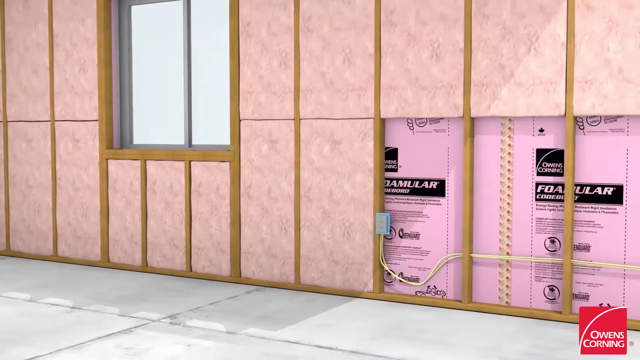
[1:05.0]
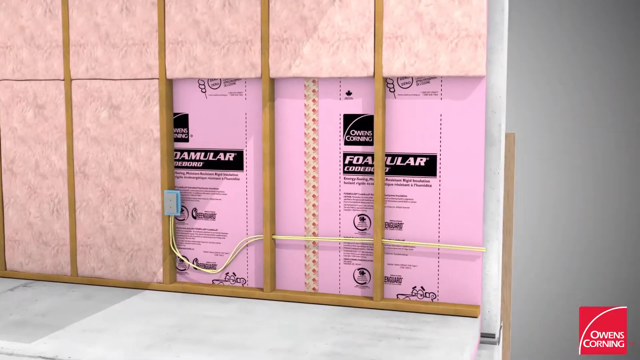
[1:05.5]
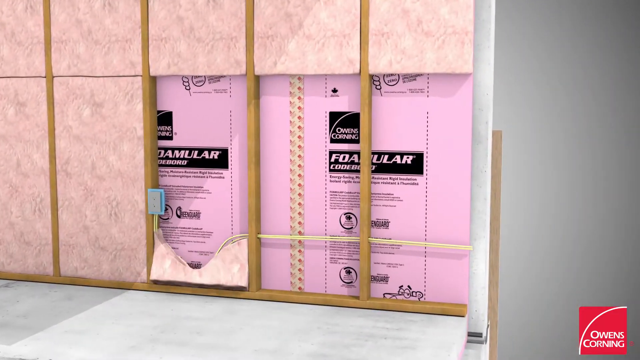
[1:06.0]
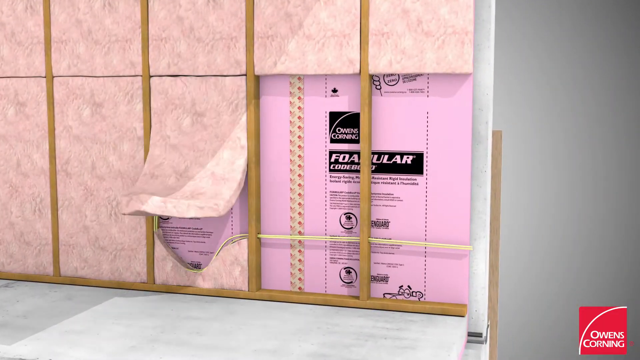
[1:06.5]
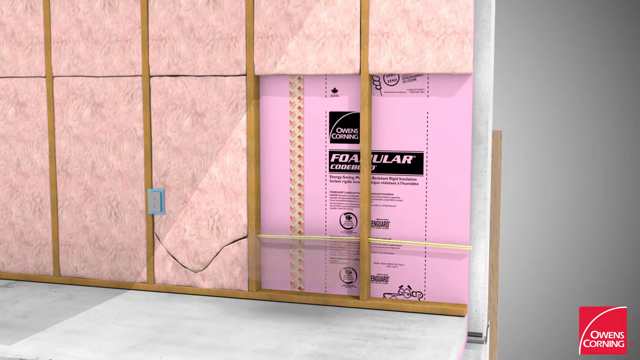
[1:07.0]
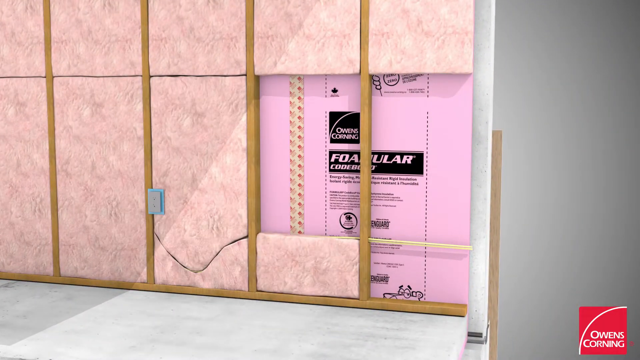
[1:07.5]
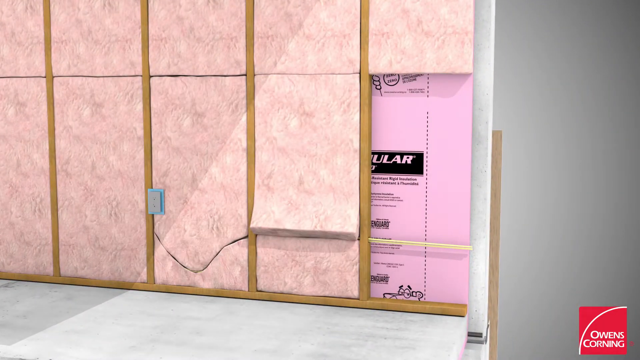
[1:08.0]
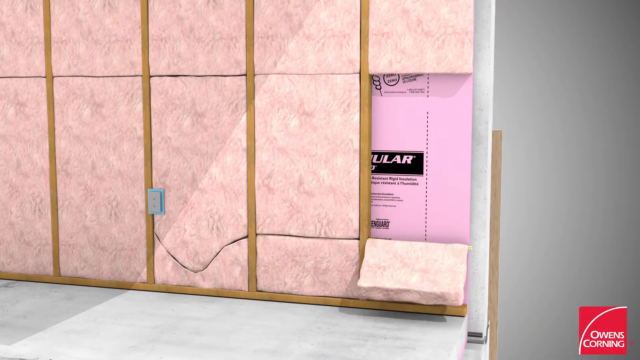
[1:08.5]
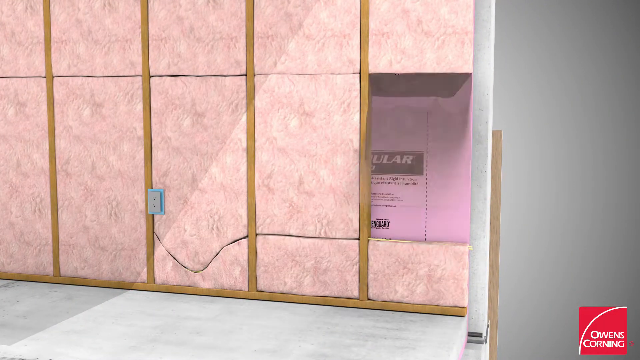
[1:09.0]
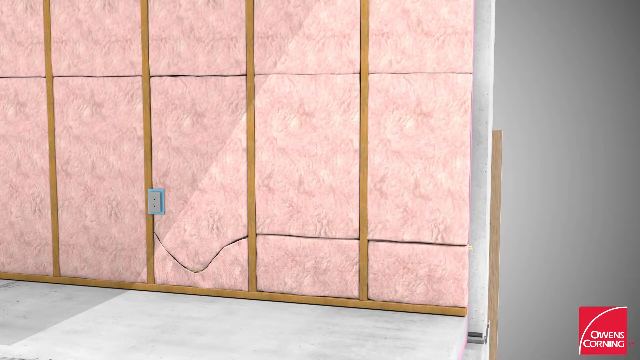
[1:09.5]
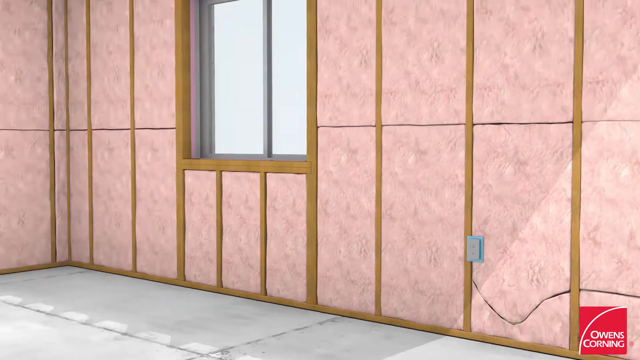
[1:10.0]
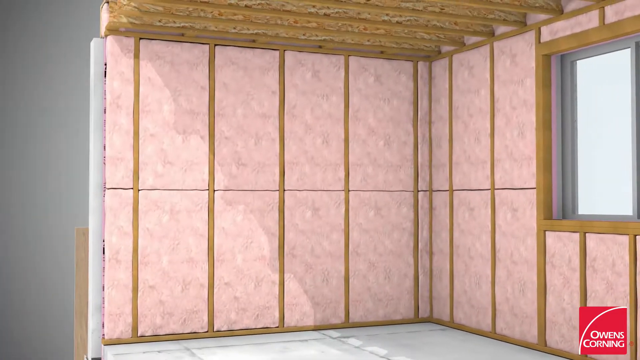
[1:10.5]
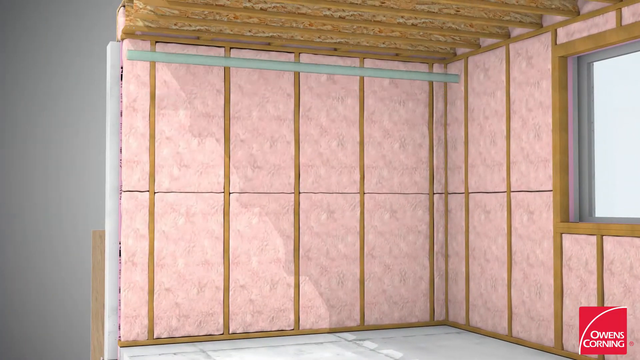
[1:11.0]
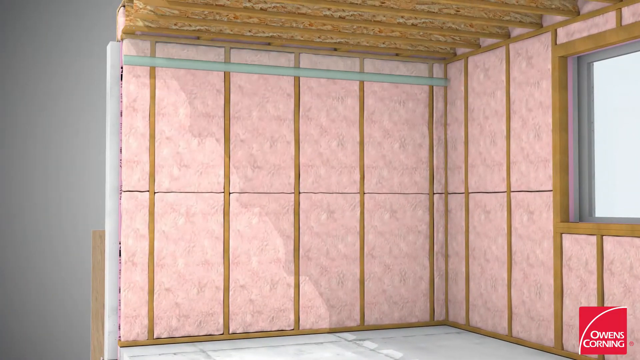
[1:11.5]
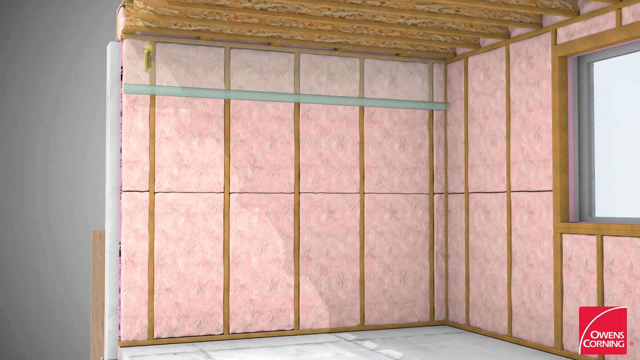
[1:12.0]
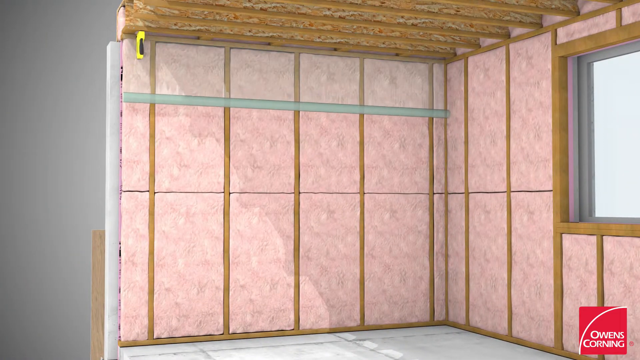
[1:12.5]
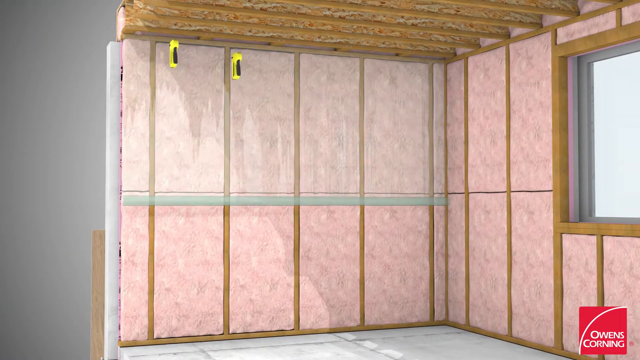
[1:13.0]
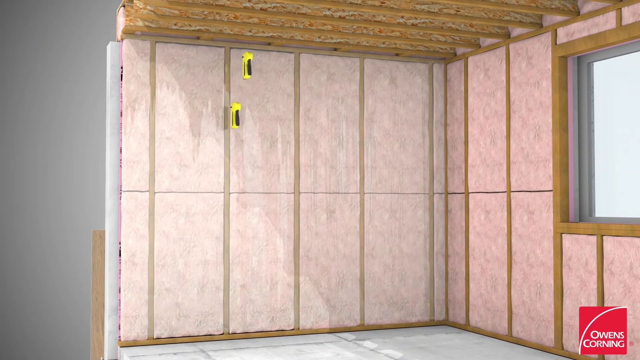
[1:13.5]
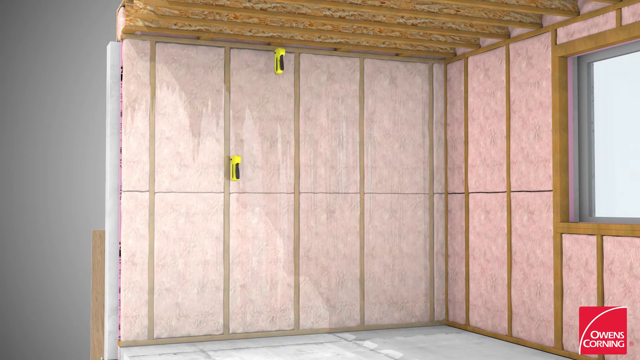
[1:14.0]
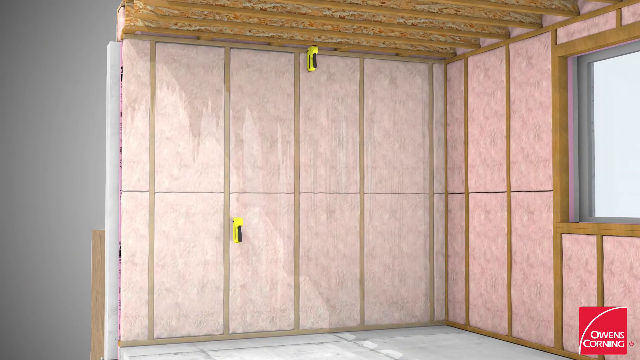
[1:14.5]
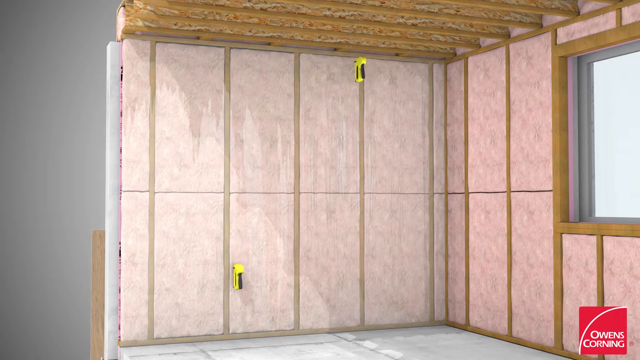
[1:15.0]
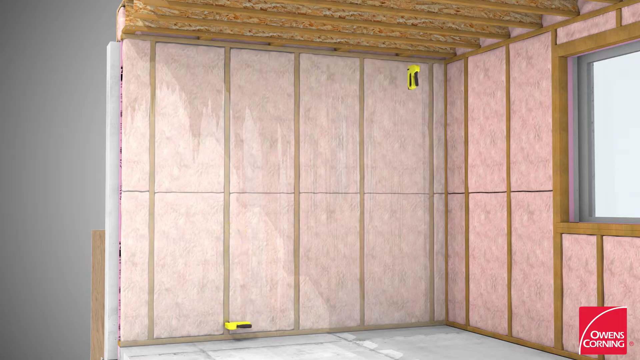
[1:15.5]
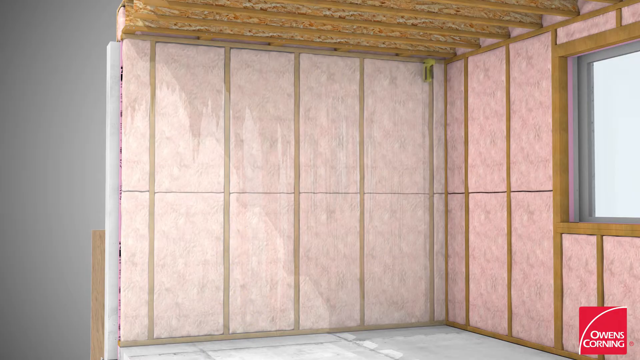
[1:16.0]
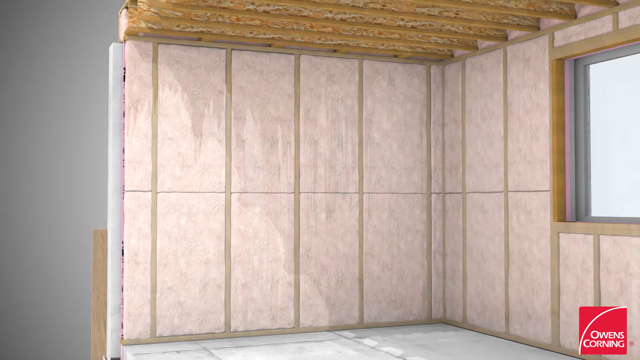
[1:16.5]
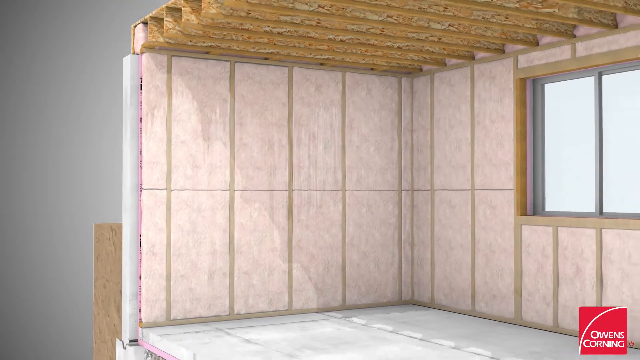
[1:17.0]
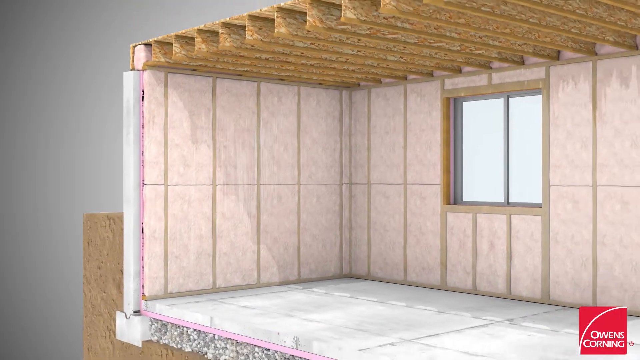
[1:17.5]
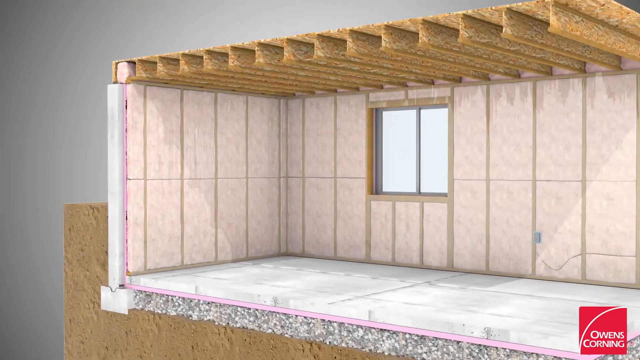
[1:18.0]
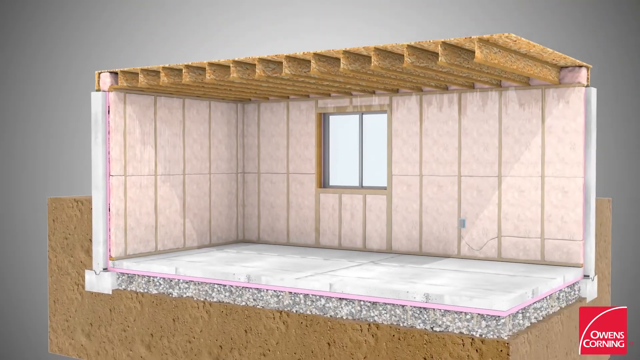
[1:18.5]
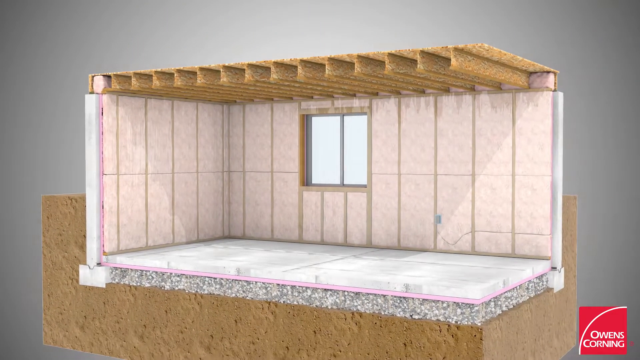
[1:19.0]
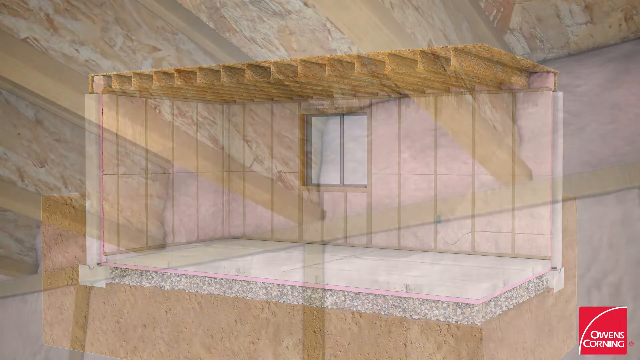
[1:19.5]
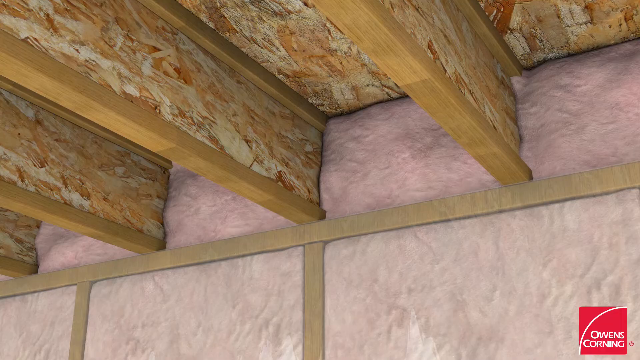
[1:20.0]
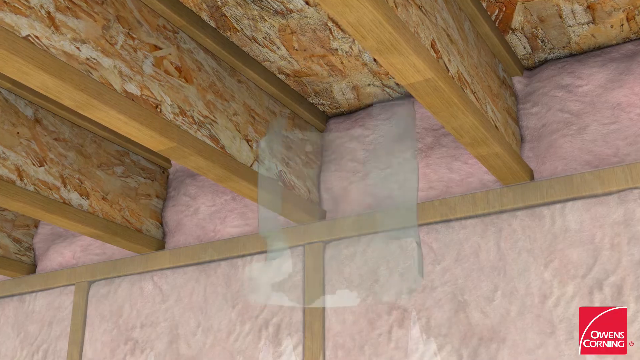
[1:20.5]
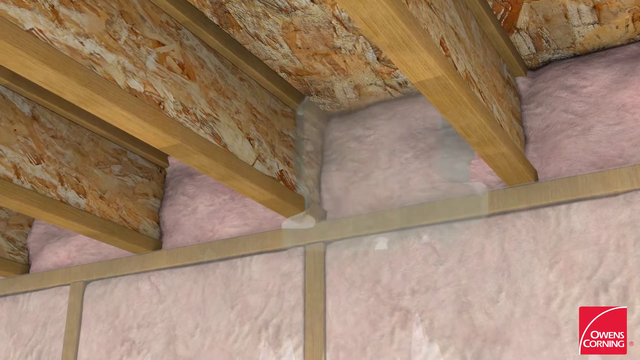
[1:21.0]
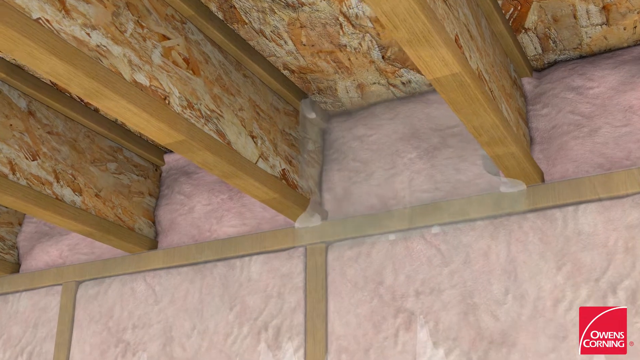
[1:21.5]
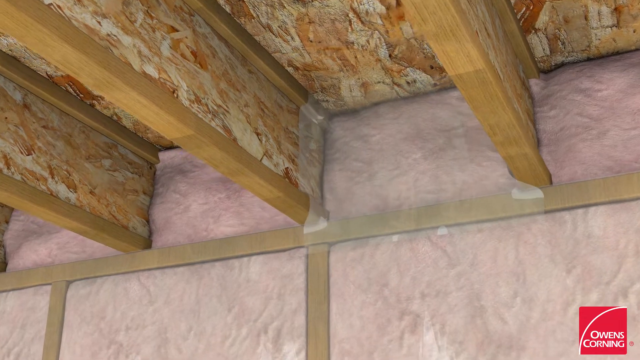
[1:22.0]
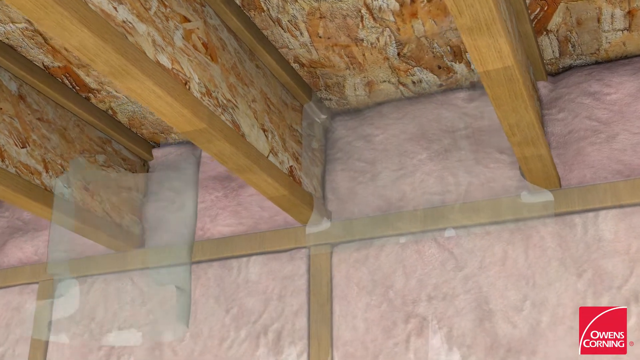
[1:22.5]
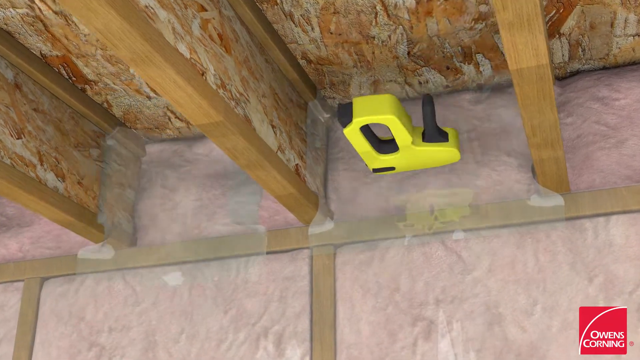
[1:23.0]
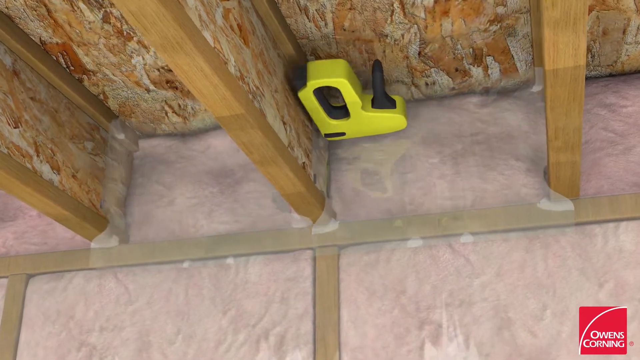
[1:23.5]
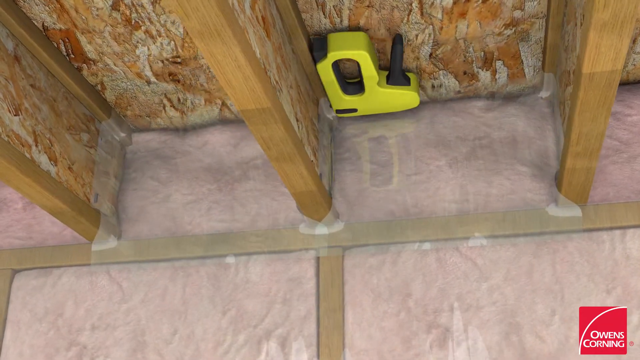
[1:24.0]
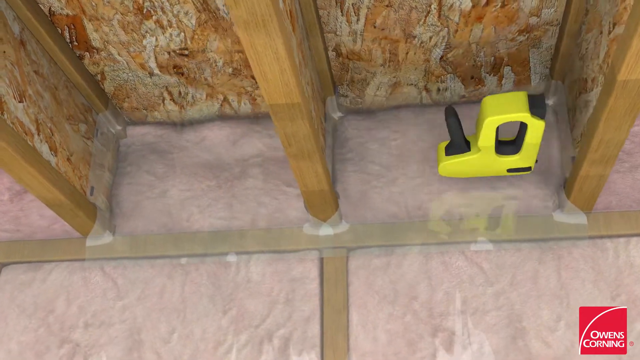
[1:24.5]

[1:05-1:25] Text reads "basement wall" over a 3D rendering of a room interior, with "Owens Corning" and a red logo in the bottom right. The product looks like a moisture barrier, a membrane that goes over the insulation to protect the room from moisture. Membrane is placed between the beams of the roof, and two neon yellow nail guns nail where the membrane is sealed against the beams. Drywall sheets go onto the ceiling and walls, followed by the framing of the window. An "alternative mineral wool application" follows, going through the same steps with the mineral wool, which looks almost dark gray, almost like Silly Putty or Play-Doh, and is laid out the same way; it is probably more environmentally friendly. The plastic membrane is nailed down, covering the room. A side-by-side comparison shows "fiberglass application" versus "alternative mineral wool application," and the video ends with what looks like a Pink Panther and some text.